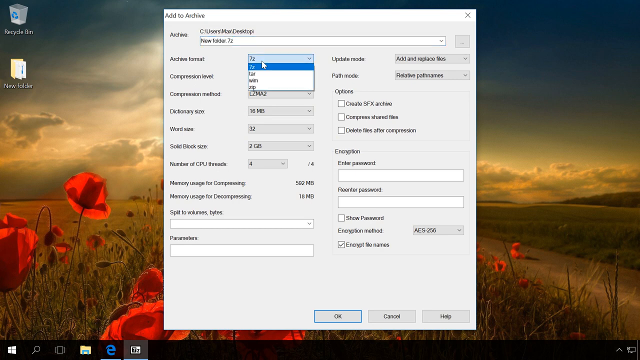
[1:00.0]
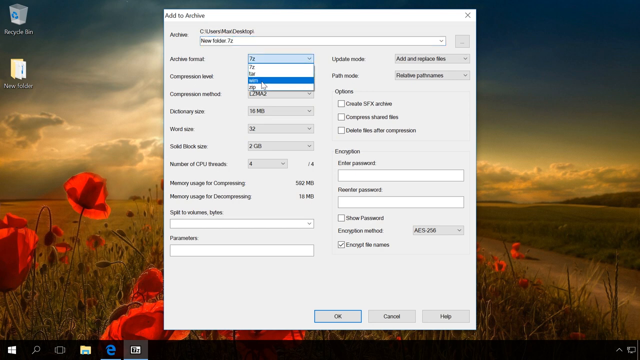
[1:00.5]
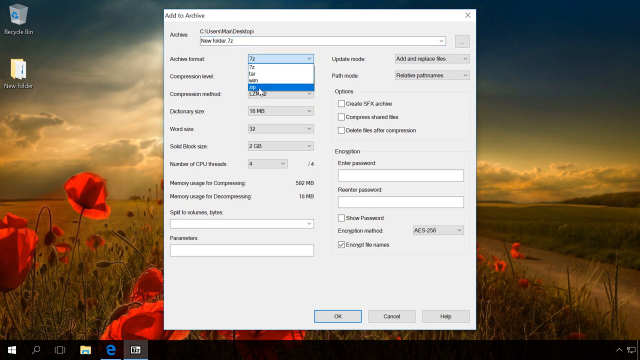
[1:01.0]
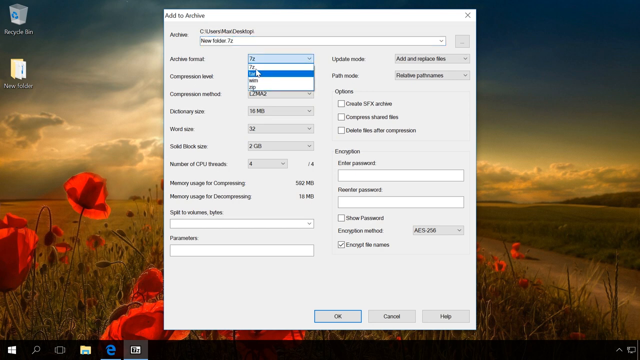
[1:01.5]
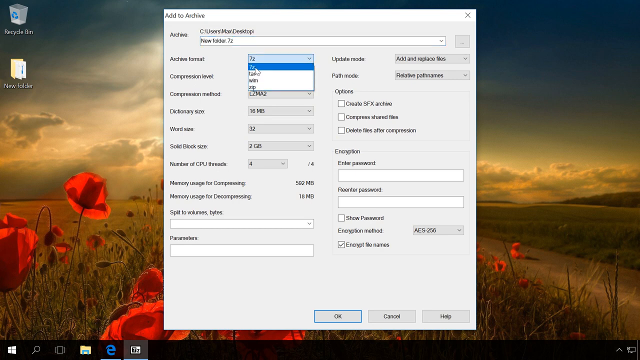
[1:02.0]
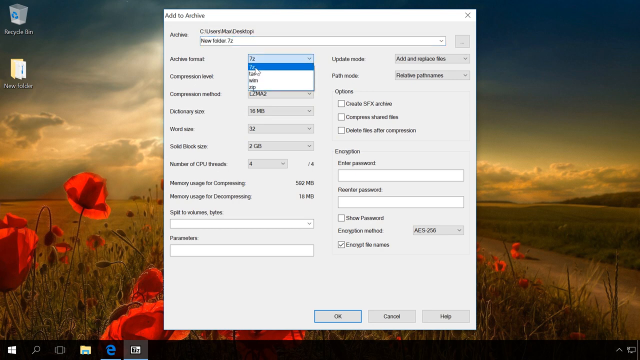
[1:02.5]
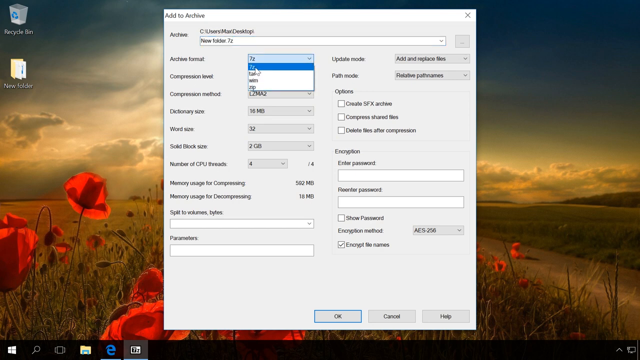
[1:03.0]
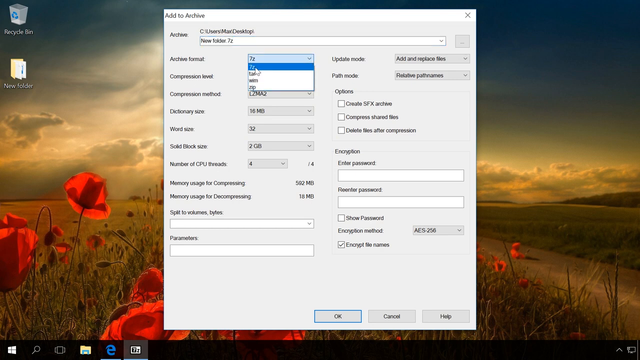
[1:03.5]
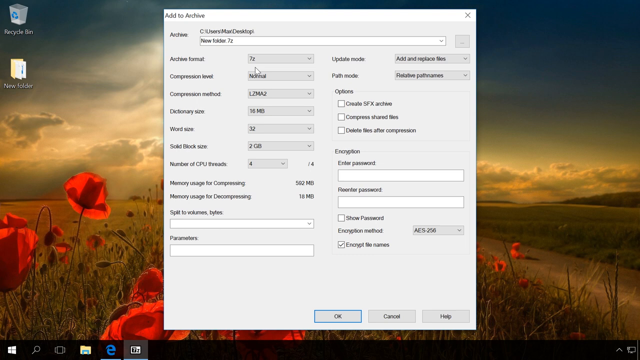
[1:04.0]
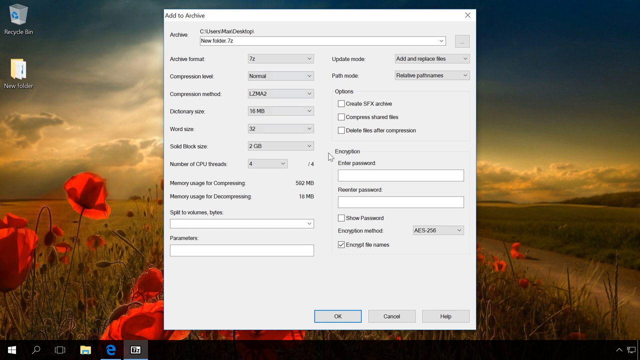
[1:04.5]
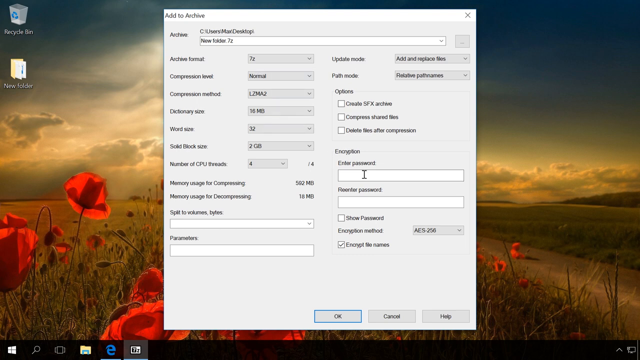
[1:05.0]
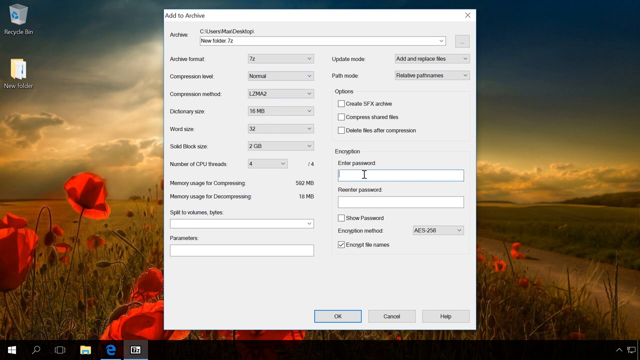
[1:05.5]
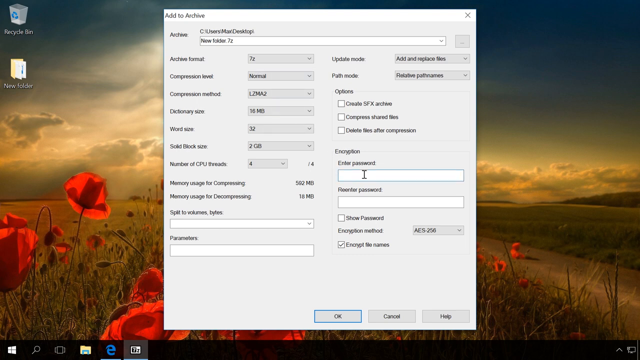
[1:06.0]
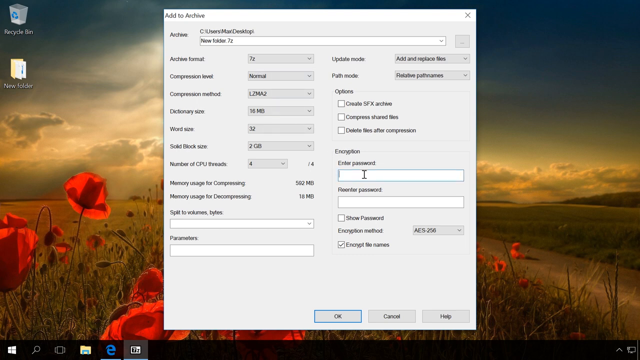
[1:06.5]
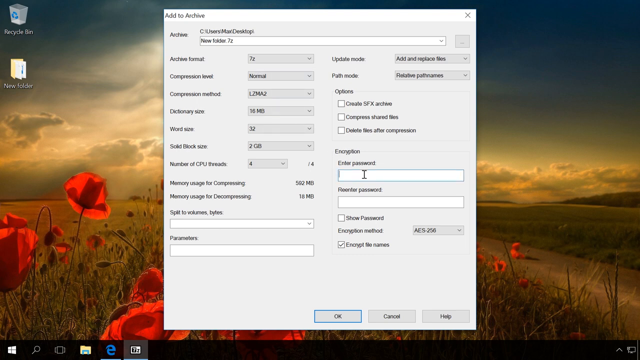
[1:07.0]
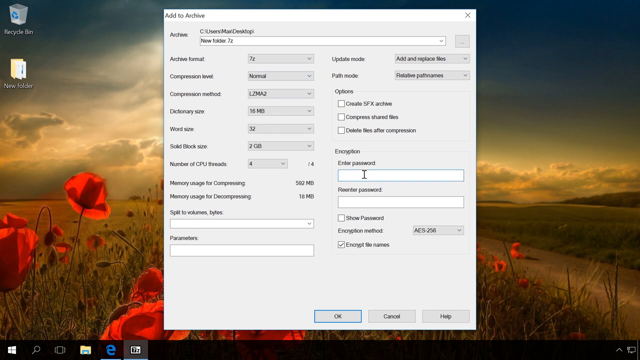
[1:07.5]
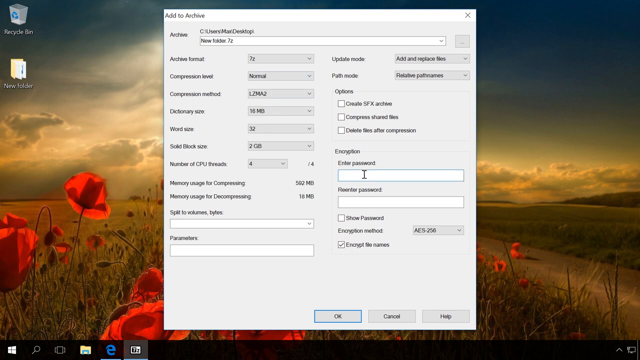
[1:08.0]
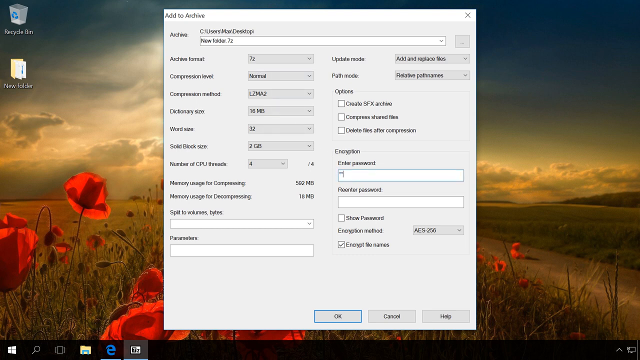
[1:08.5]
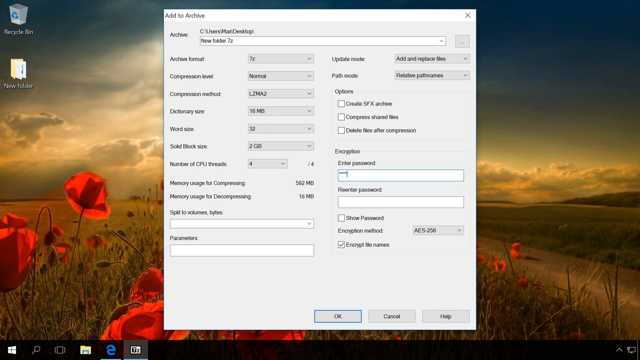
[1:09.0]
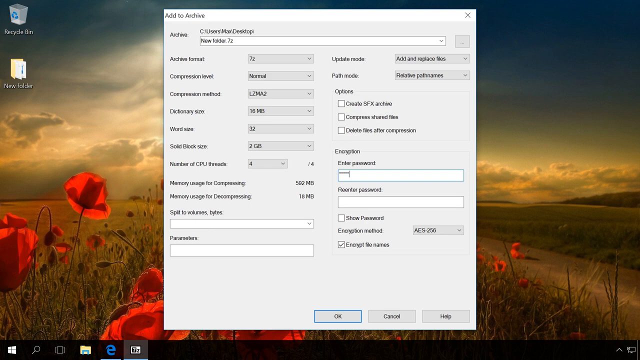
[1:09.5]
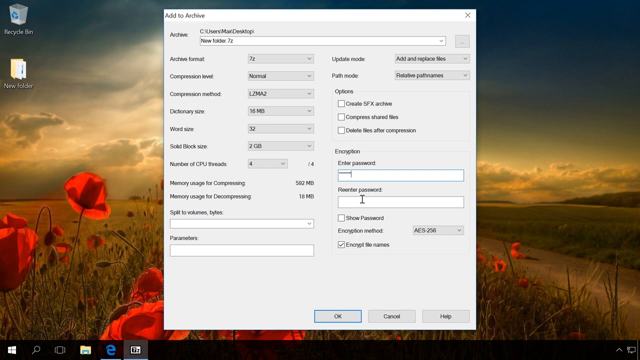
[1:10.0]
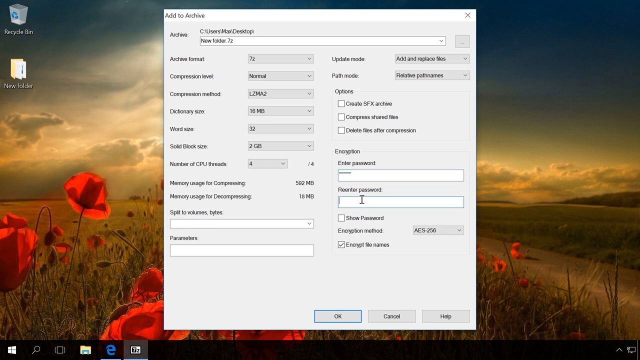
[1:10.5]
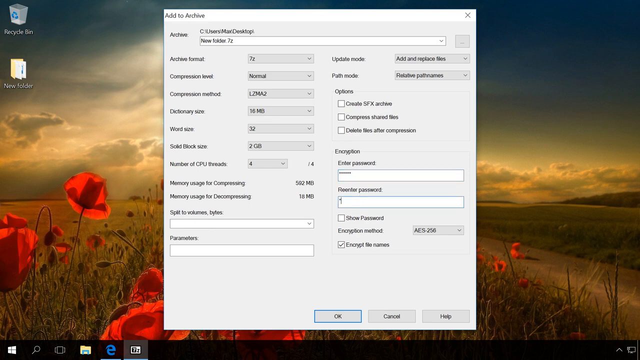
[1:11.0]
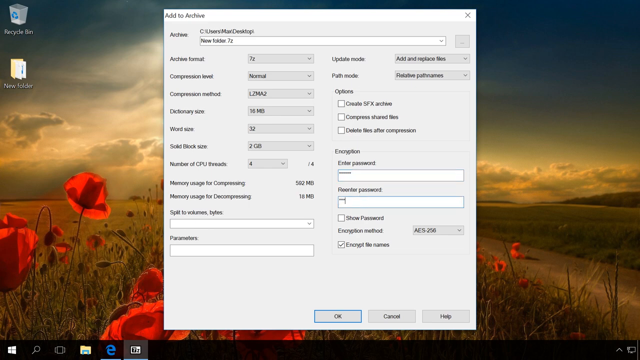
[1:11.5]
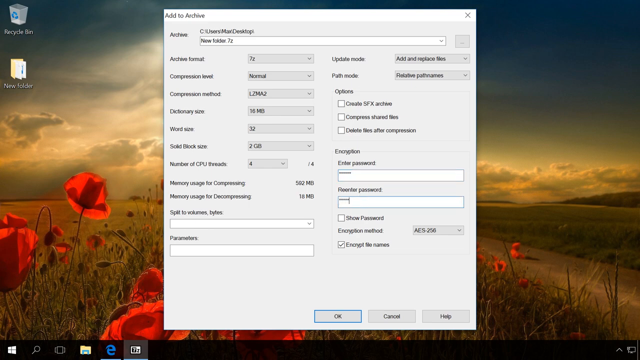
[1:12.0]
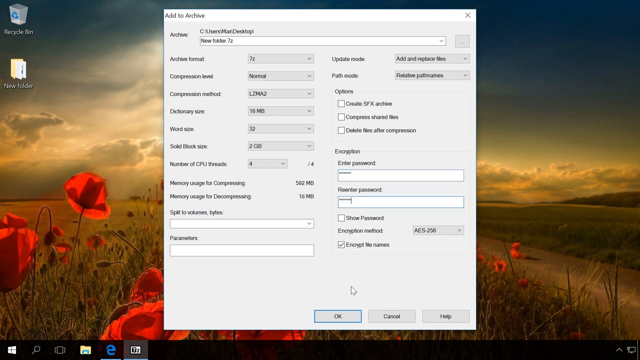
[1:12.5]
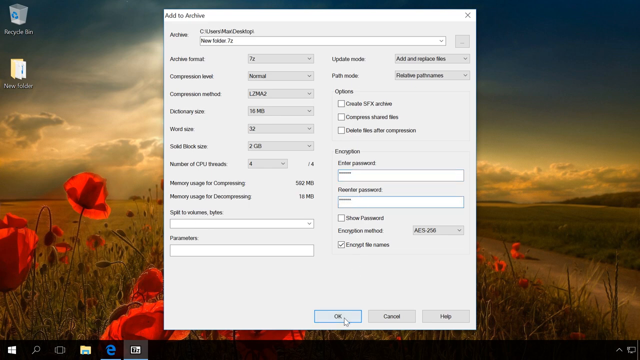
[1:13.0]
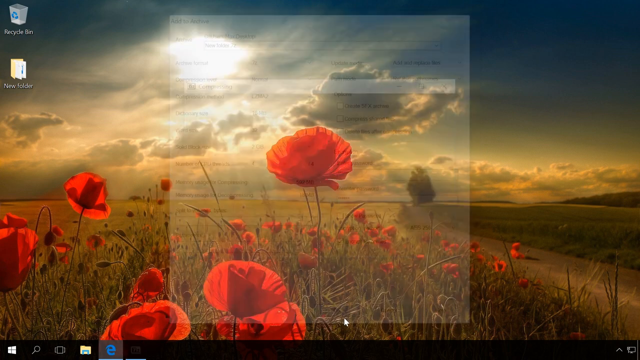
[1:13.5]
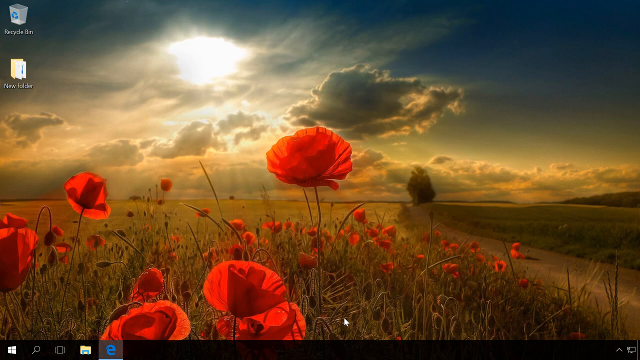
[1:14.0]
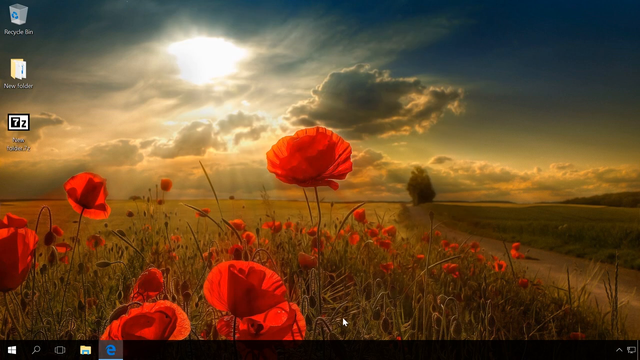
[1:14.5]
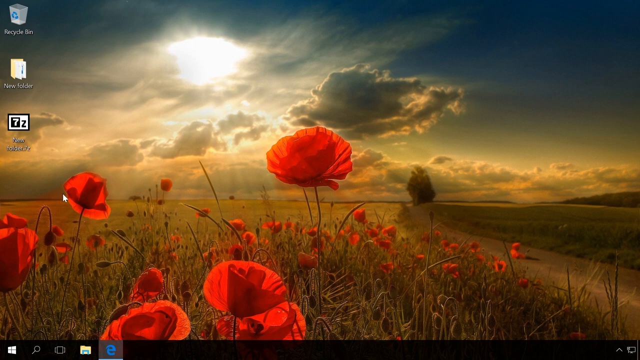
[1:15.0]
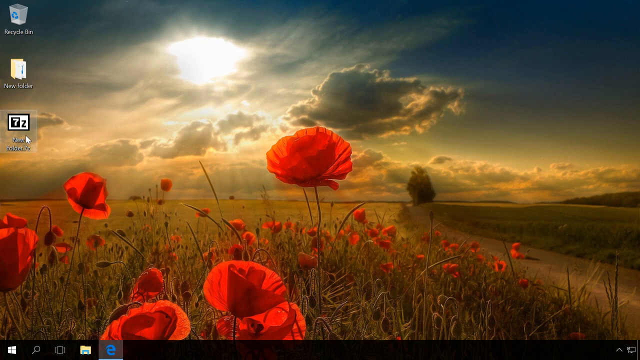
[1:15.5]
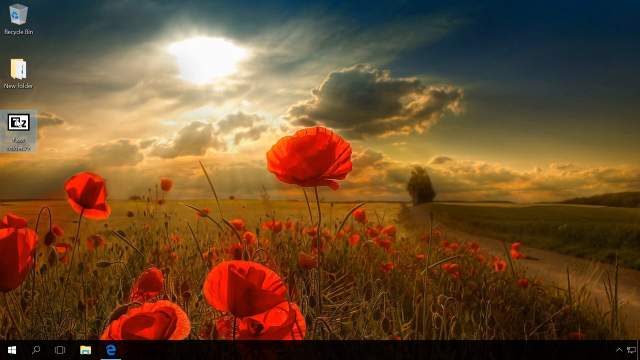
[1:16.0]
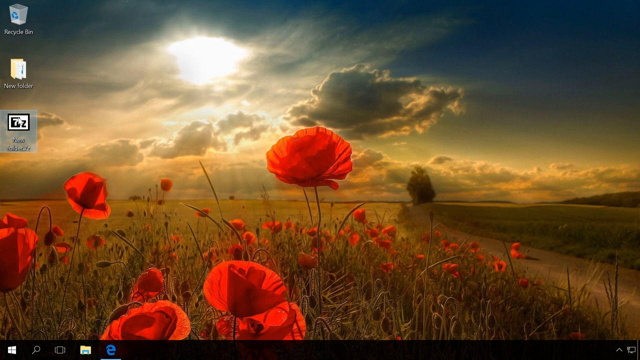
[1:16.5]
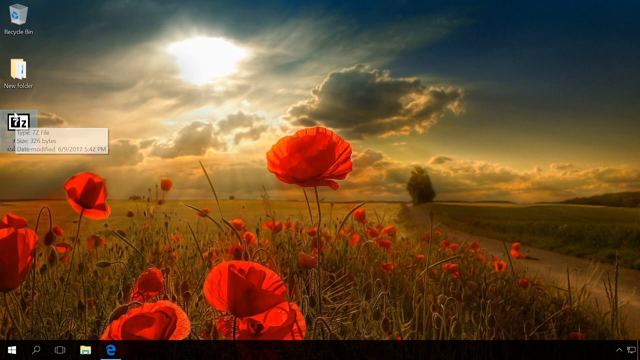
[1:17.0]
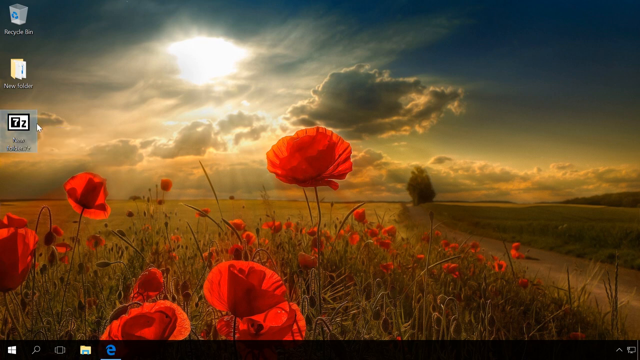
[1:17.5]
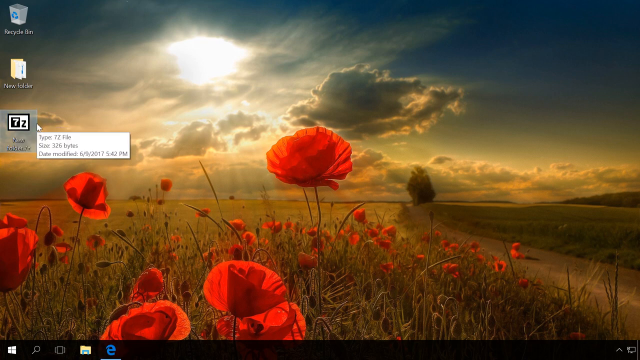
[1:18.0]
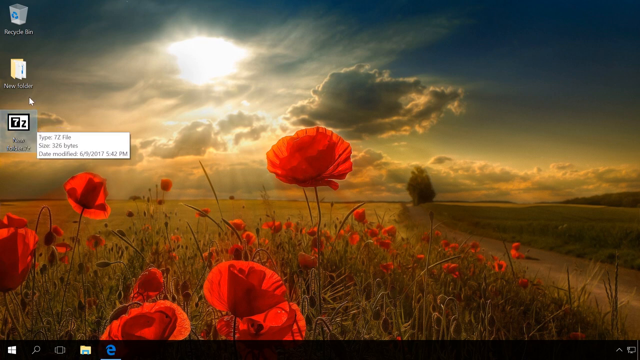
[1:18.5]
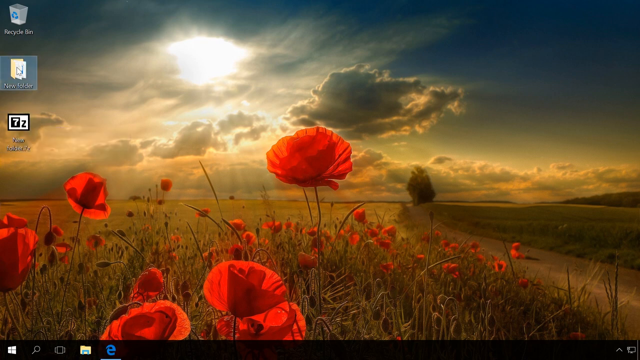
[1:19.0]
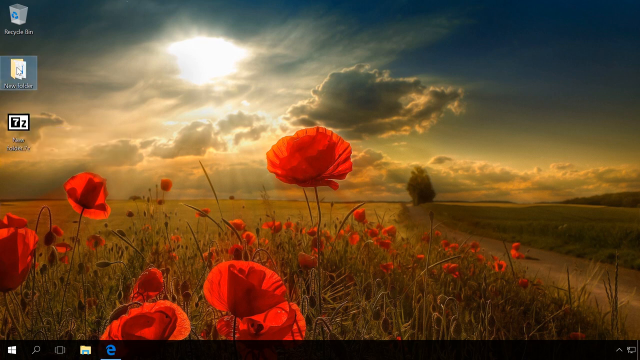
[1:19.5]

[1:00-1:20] With a click, the view returns to the computer screen wallpaper featuring the poppies. Apparently the background is clicked to bring up a menu, 7-Zip is chosen, and "add to archive" is clicked. A window with a gray background appears in the middle of the screen with options for adding to an archive. The archive path is very blurred but appears to be "C, users, Macs, desktop", with "new folder 7Z". The first option is the archive format, with a dropdown menu showing only "7Z". Compression level shows only "normal", with a down arrow suggesting other options. Lower down are compression method, dictionary size and word size, all with dropdown arrows. The 7z dropdown is opened, showing four options. The cursor then goes to the other side of the box and presses for encryption. On the home screen, below the Recycle Bin and New Folder, another folder relating to 7Z appears.